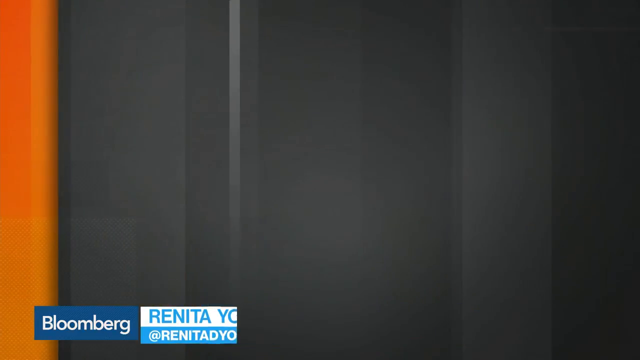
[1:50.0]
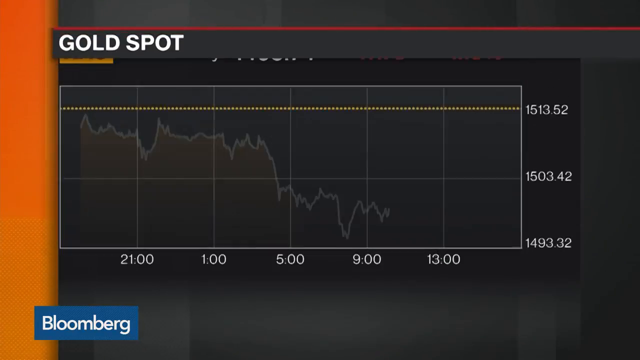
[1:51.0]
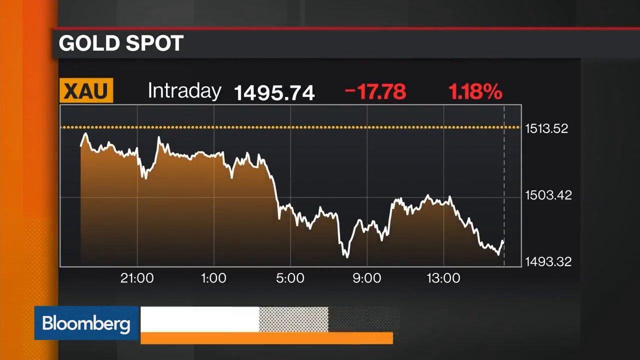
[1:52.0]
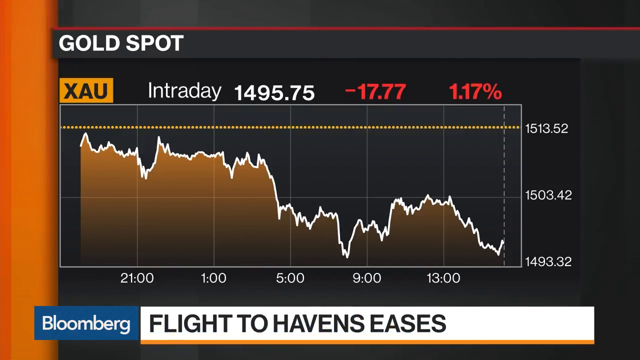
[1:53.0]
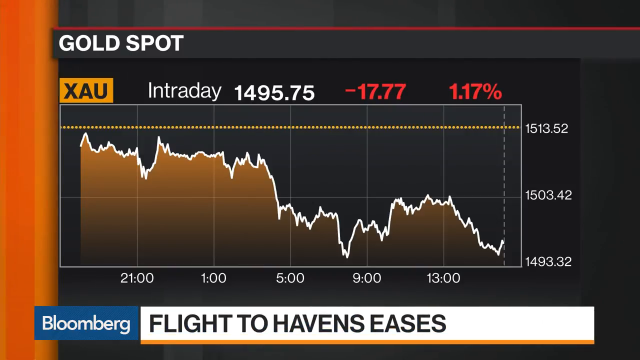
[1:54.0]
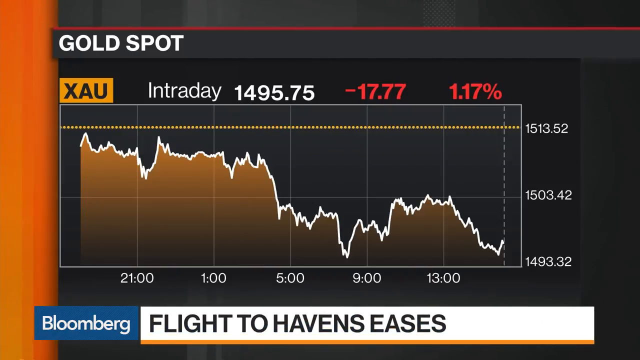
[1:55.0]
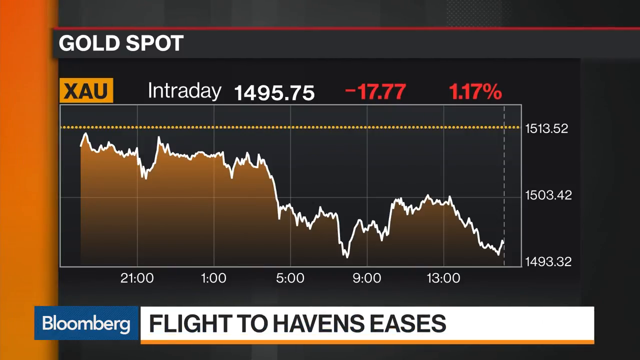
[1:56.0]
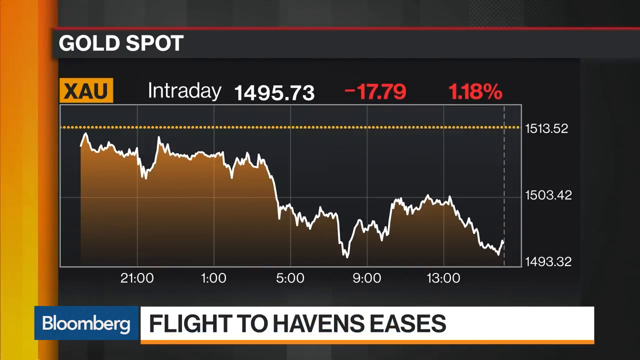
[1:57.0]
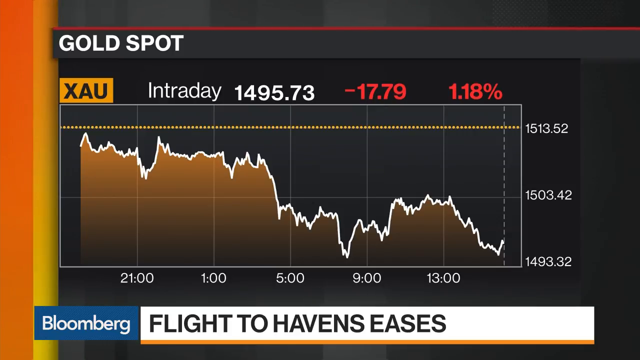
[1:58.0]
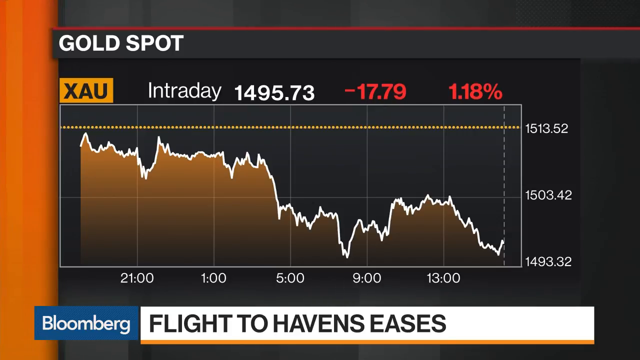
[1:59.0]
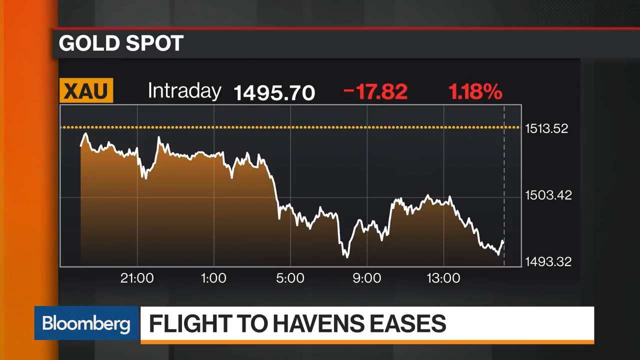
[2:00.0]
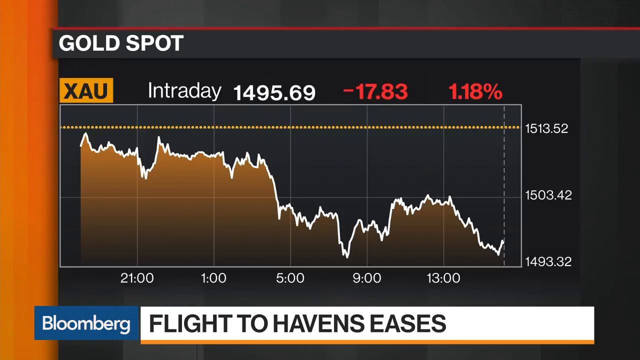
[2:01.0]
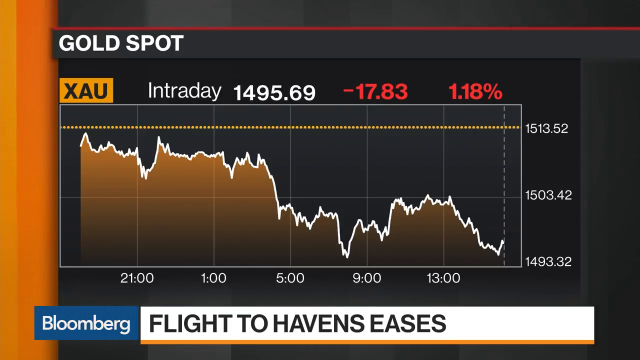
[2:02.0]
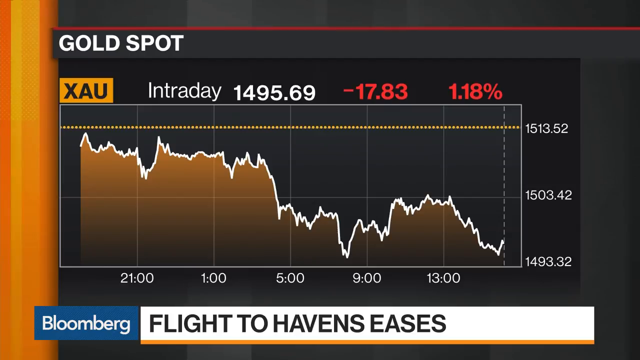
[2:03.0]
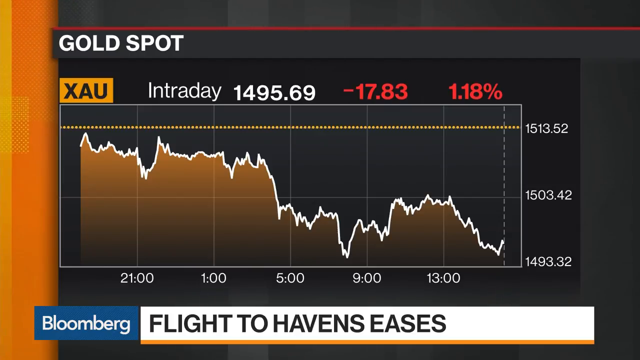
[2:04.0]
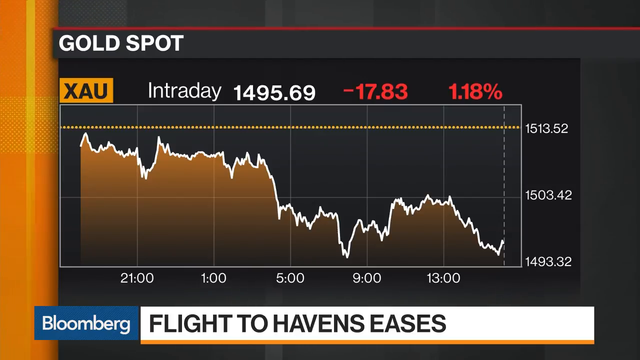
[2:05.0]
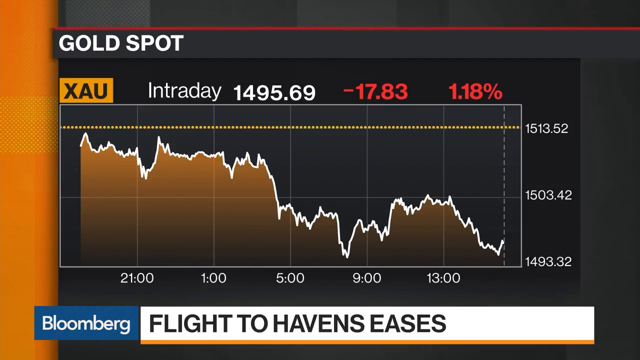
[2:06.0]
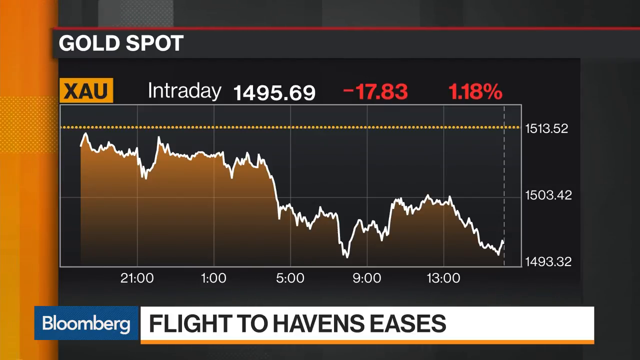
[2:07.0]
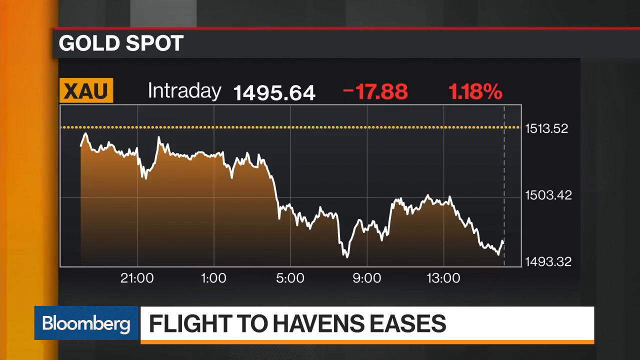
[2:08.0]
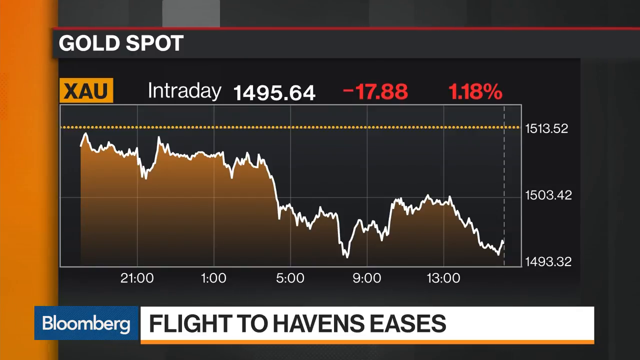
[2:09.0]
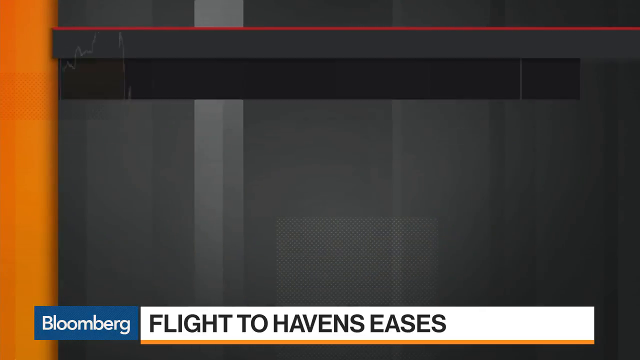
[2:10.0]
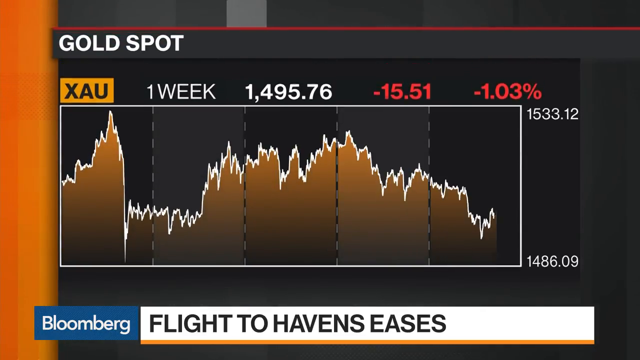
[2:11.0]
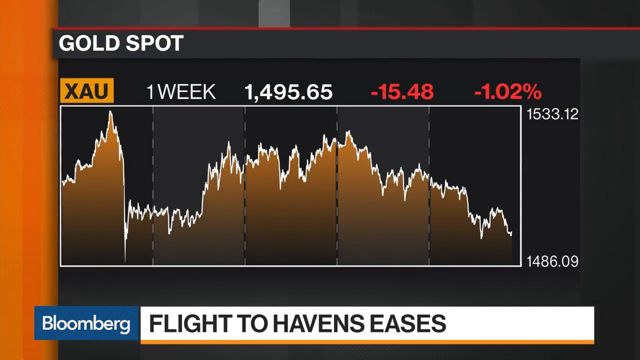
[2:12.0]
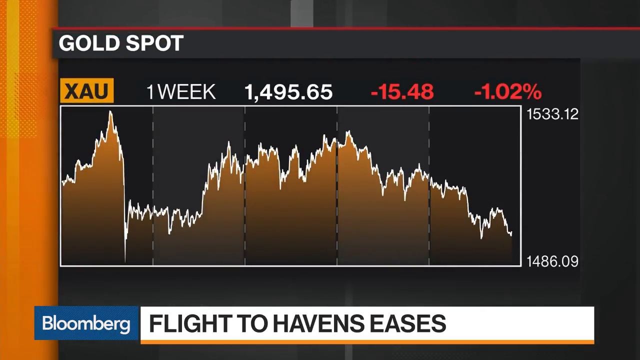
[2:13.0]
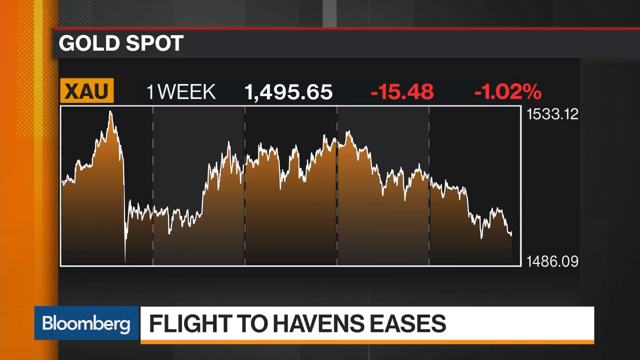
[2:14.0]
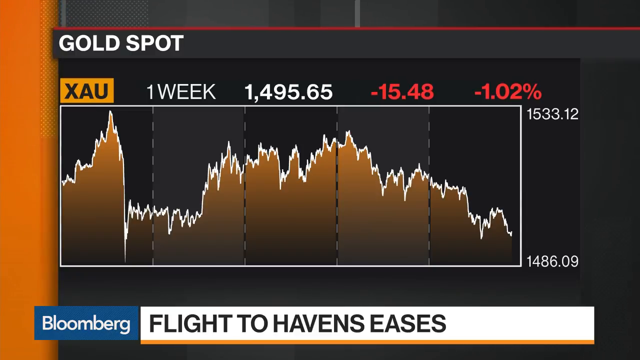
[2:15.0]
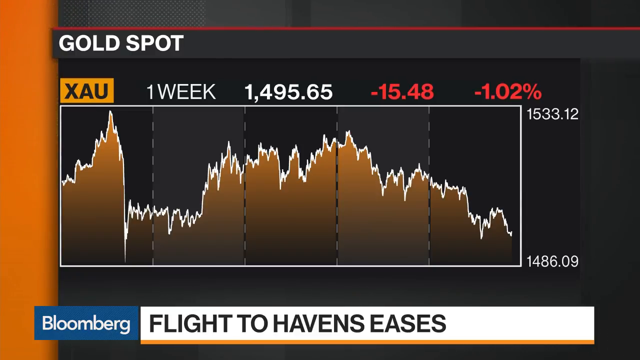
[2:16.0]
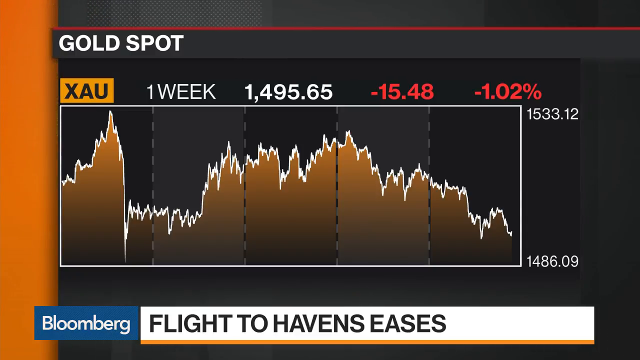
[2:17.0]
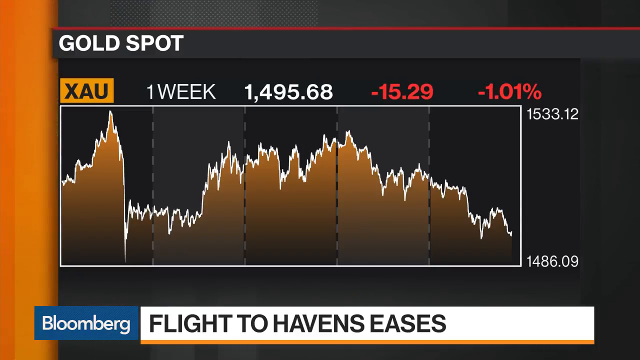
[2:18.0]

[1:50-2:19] A banner at the bottom reads "Renita Young" in blue text. The view transitions to a statistics graph with "gold spot" in white lettering at the top left. Beneath it, an orange banner in black lettering reads "XAU," followed in white by "1495.74" and in red by "-17.78" and "1.18%." The horizontal axis runs from 2100 to 1300, and the vertical axis from 1493.32 up to 1513.52. The line starts high, toward 1513.52, drops to around 1503.42 near 5, dips slightly toward 1493.32 near 9, bounces back up to 1503.42 at 1300, and then drops back toward 1493.32. Black text at the bottom reads "flight to havens eases," with a blue banner reading "Bloomberg" in white text on the bottom left. The display, still on gold spot, changes to a different graph with different numbers on its right side: 1486.09 at the low end and 1533.12 at the top. The line trends up, then down, then up again before dropping to 1486 on the far right.